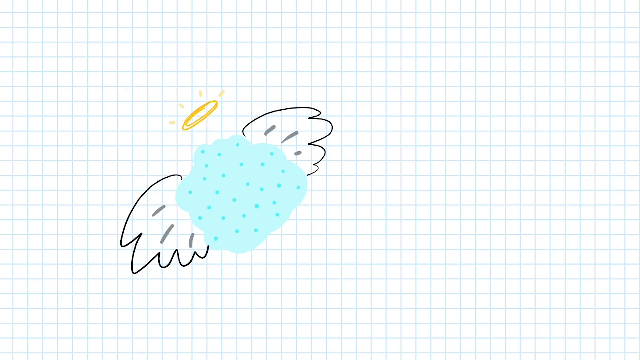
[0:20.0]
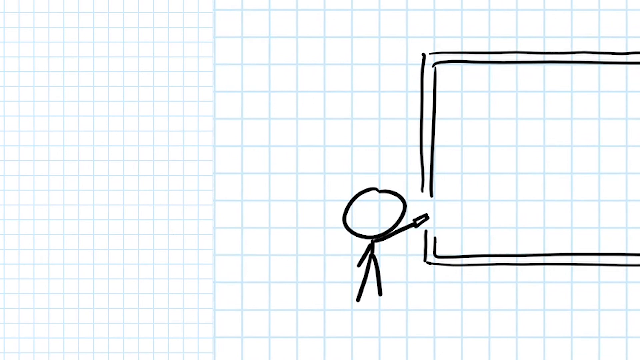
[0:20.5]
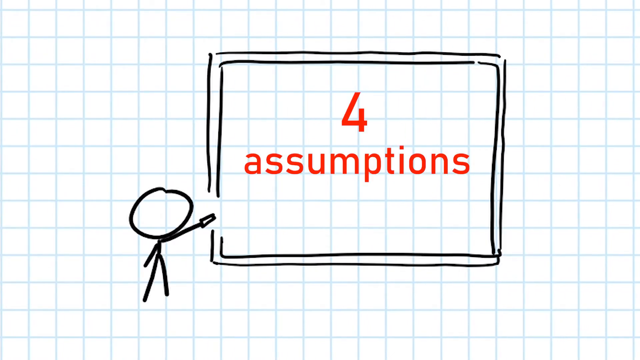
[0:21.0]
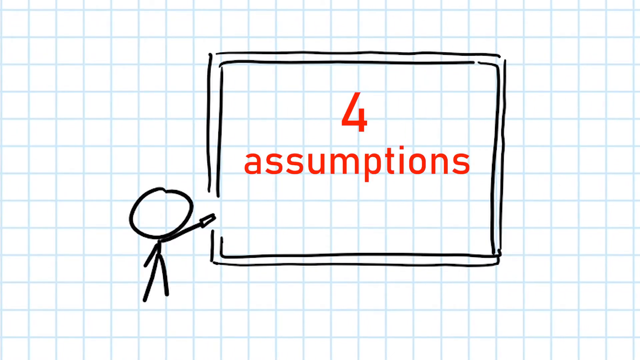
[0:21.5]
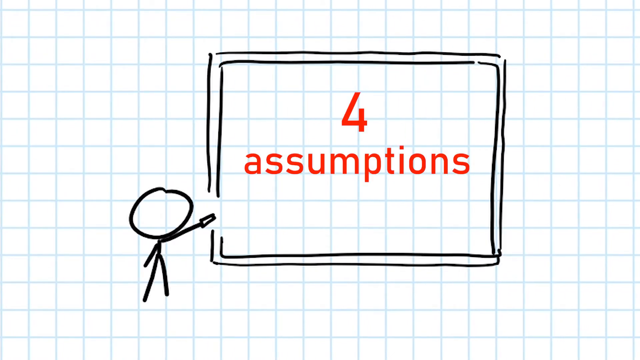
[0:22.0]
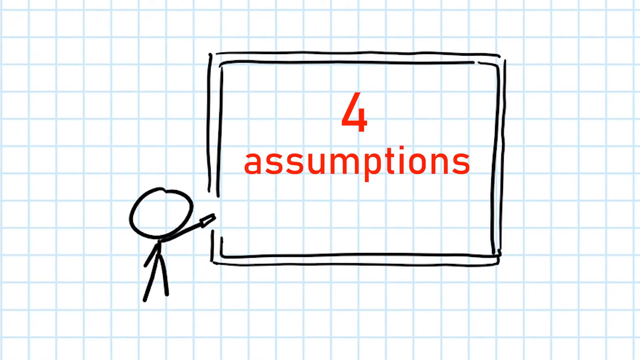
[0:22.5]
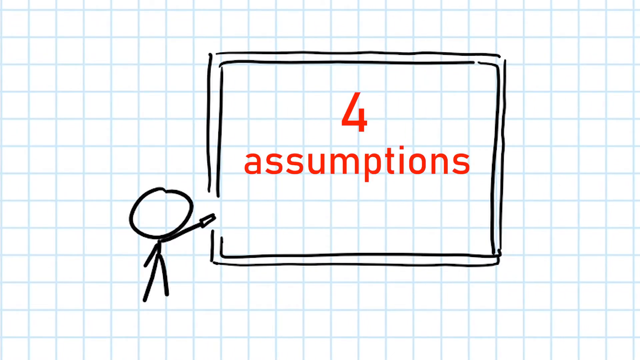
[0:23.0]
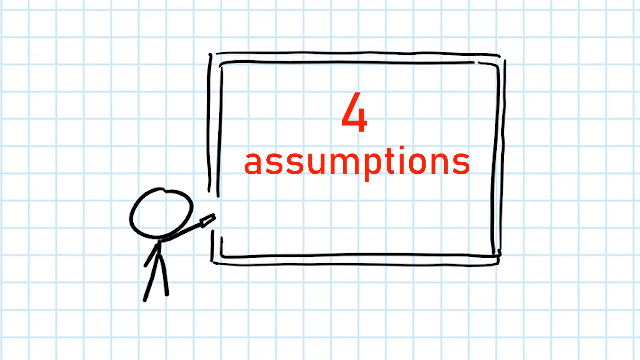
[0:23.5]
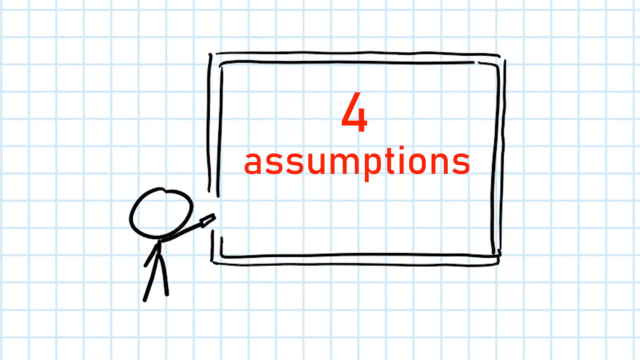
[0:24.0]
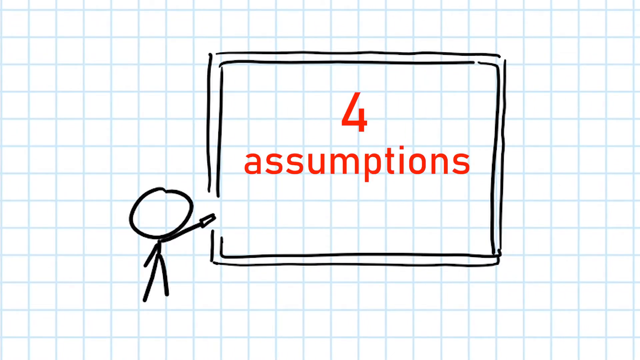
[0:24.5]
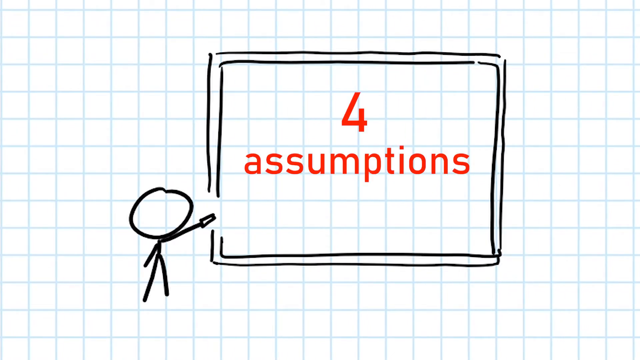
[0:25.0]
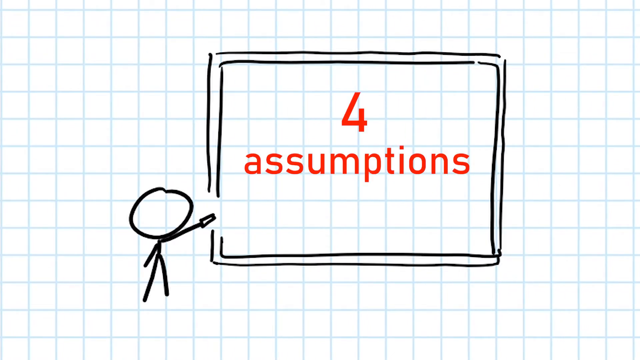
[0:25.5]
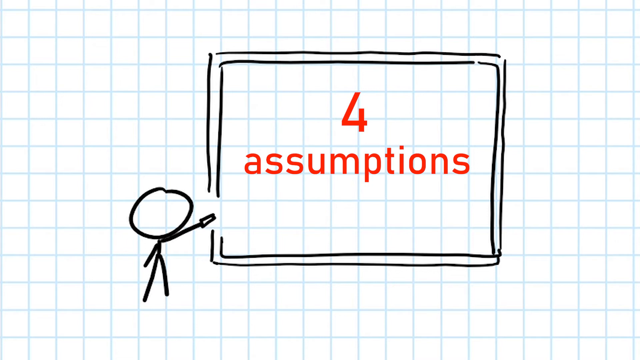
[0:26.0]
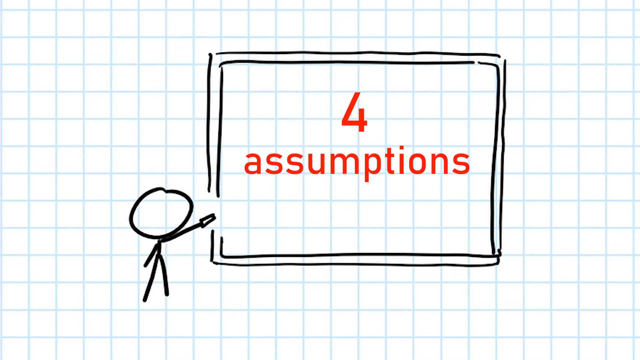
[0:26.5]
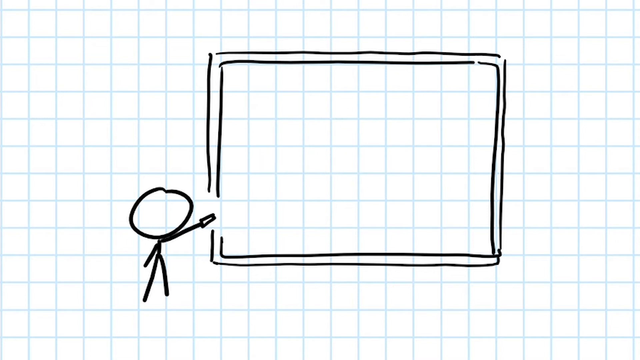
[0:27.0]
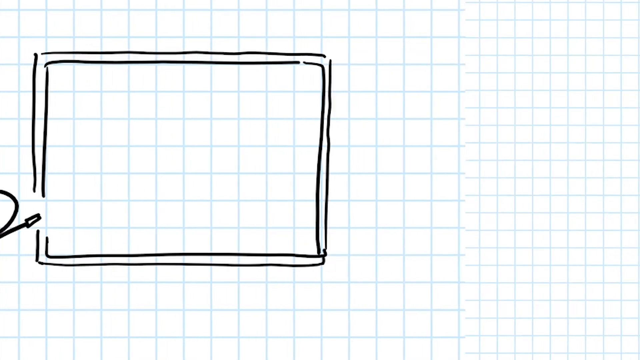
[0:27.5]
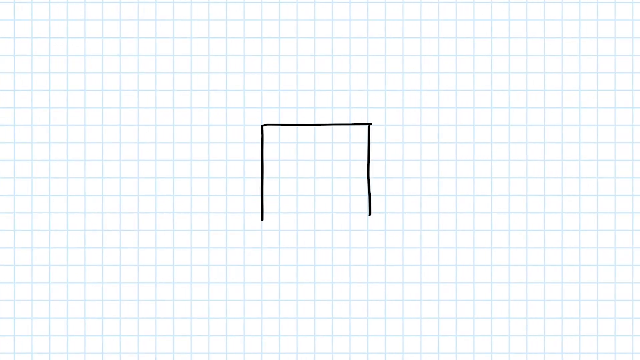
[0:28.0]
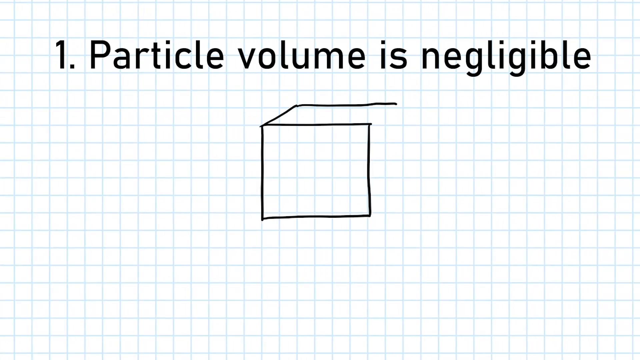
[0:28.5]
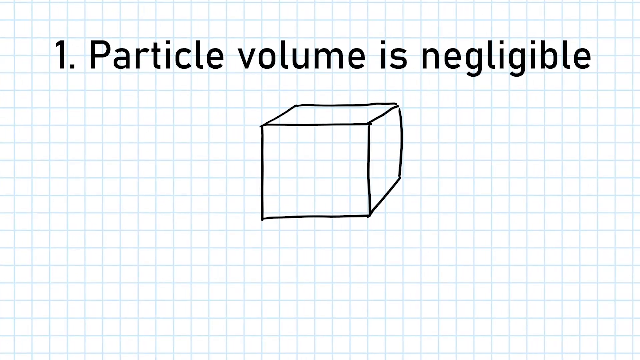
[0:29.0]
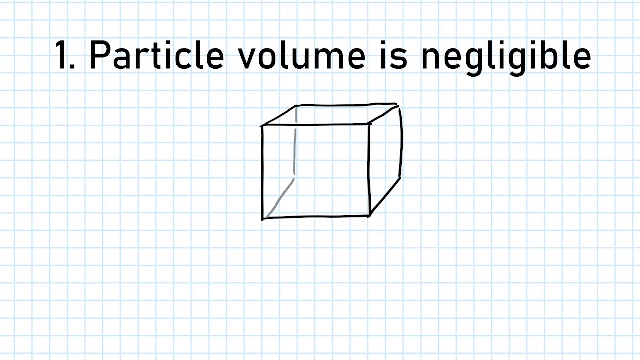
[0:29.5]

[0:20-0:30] On the same grid paper layout, the cloudy blue microscopic cloud with angel wings is shown, and then the view swings over to the right to a stick man holding a piece of chalk in his left hand. On the board he is writing on, "four assumptions" appears in red text, followed by a number one at the top and the text "particle volume is negligible", apparently the start of a list of the four assumptions. Something seems to be being drawn.